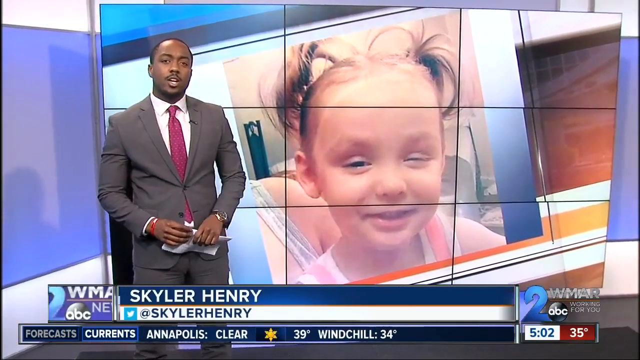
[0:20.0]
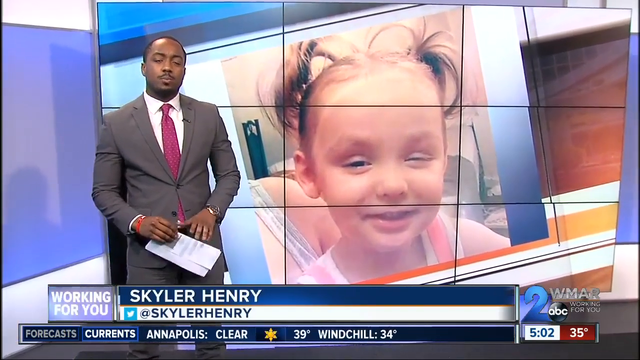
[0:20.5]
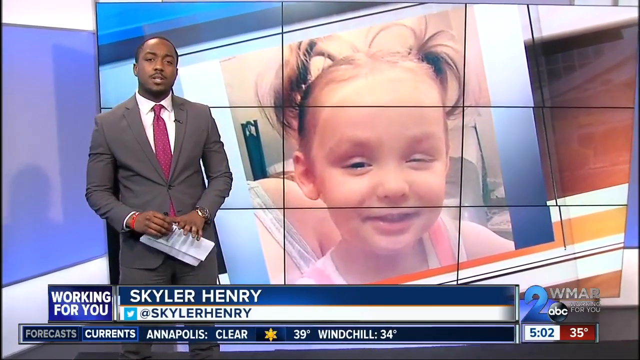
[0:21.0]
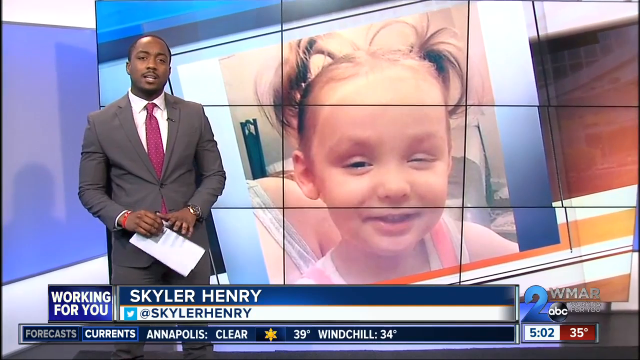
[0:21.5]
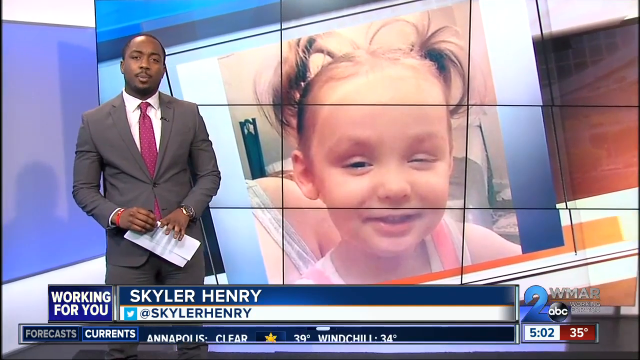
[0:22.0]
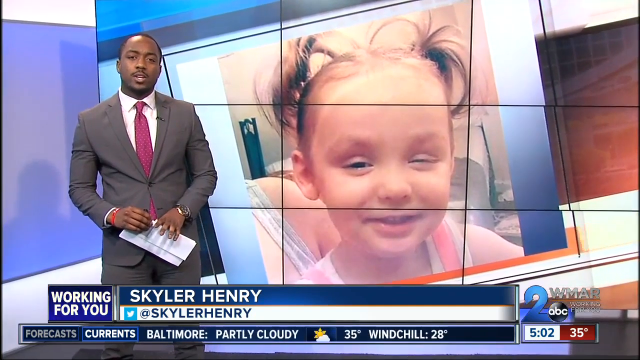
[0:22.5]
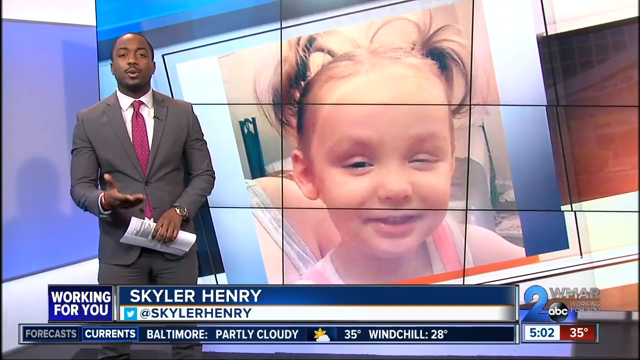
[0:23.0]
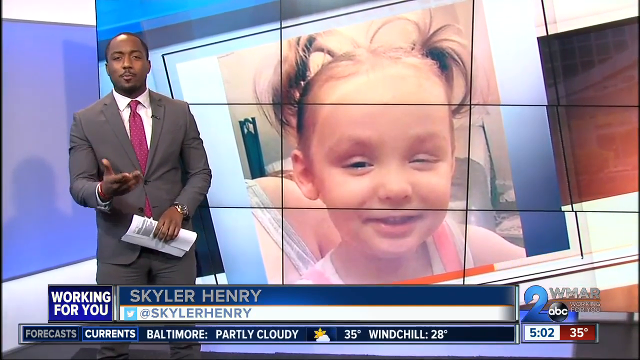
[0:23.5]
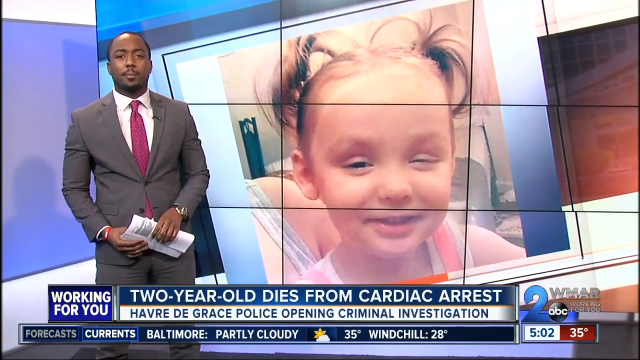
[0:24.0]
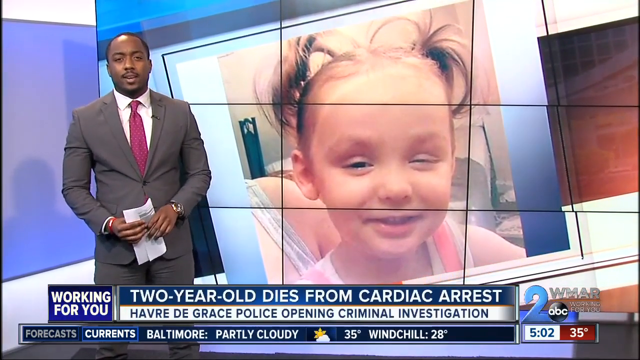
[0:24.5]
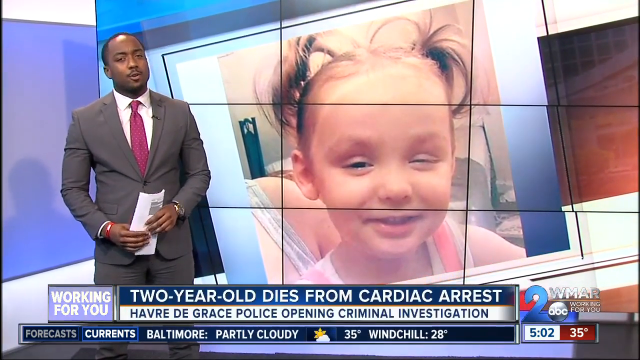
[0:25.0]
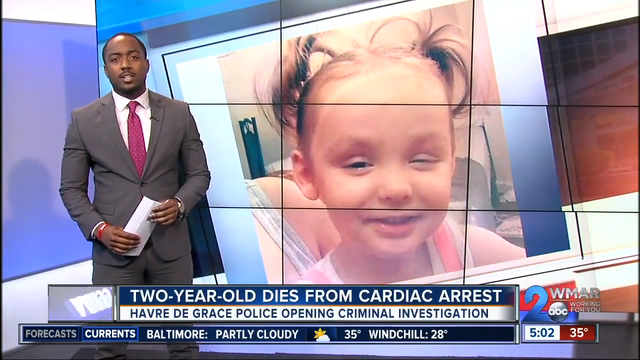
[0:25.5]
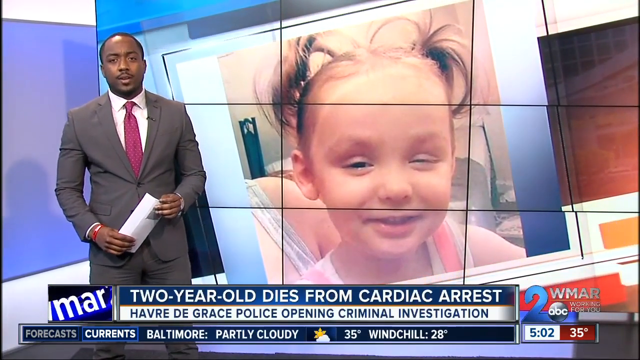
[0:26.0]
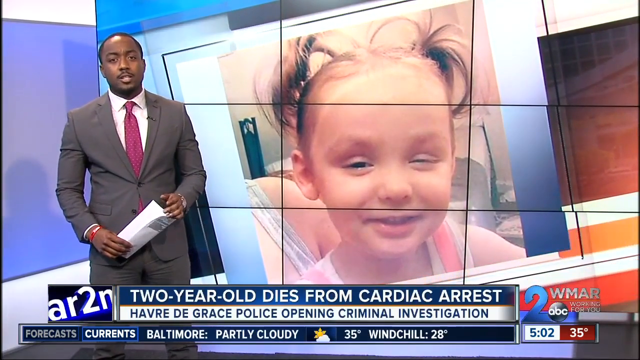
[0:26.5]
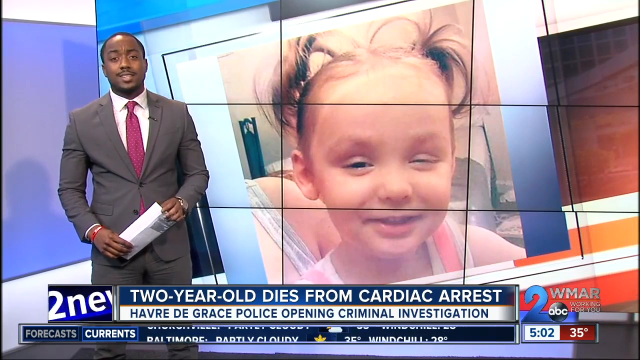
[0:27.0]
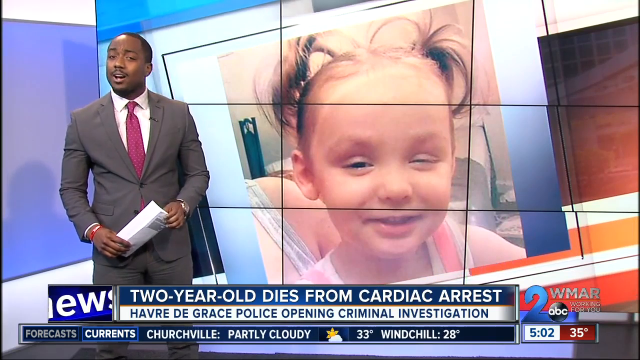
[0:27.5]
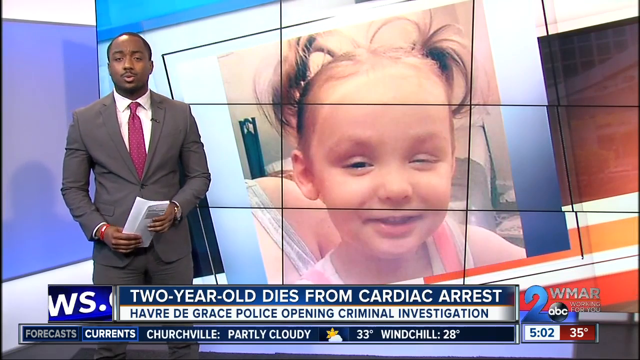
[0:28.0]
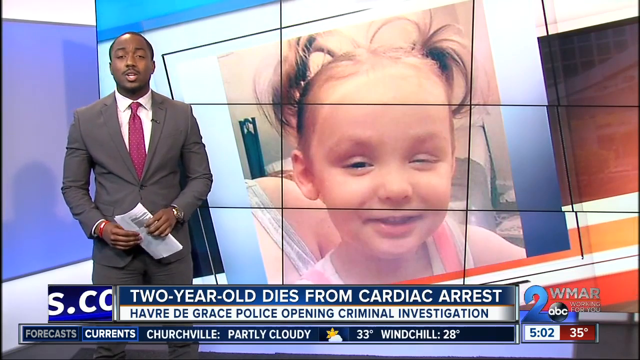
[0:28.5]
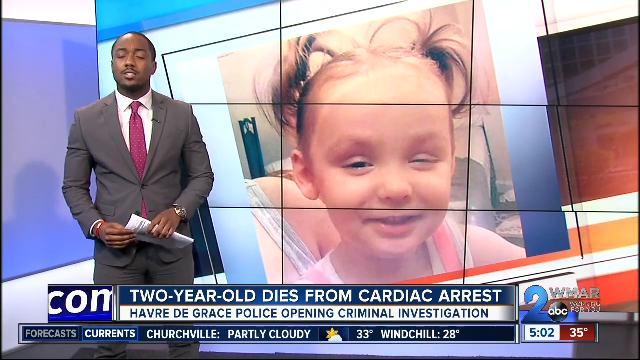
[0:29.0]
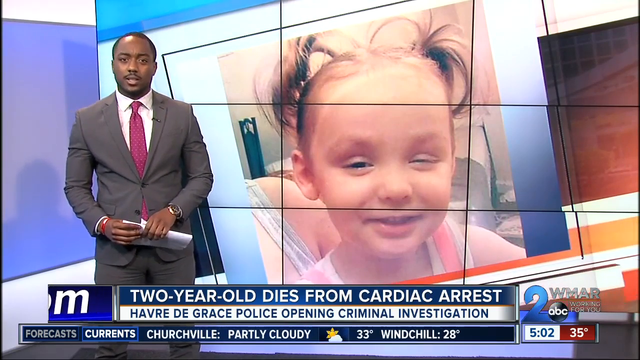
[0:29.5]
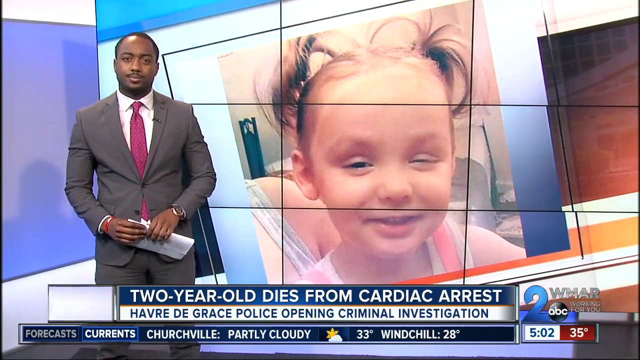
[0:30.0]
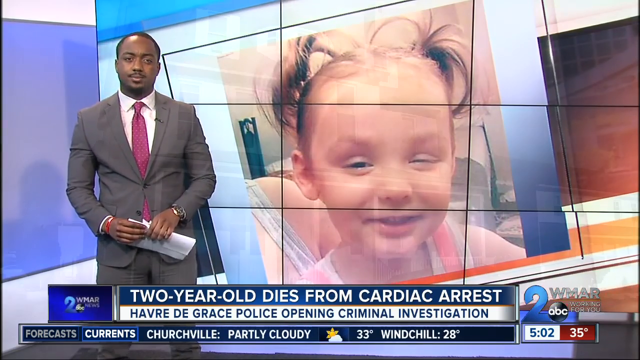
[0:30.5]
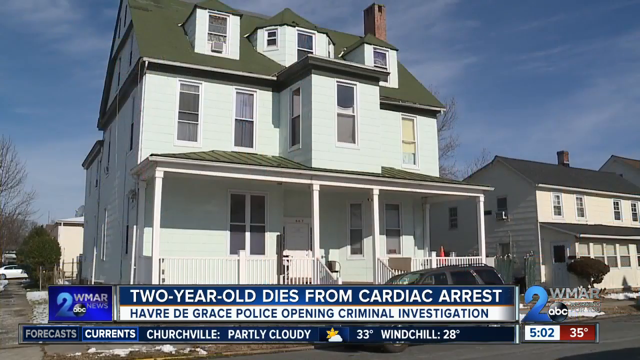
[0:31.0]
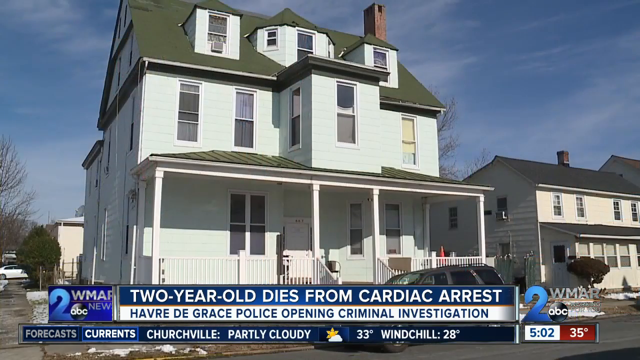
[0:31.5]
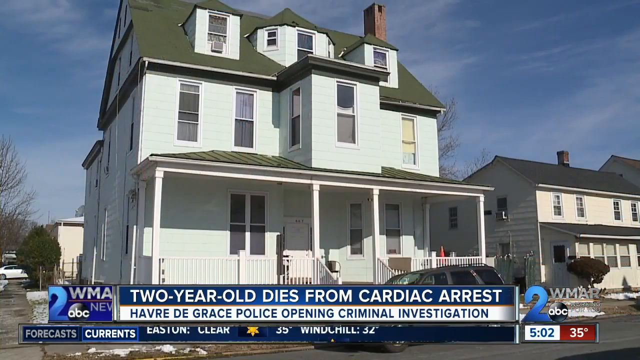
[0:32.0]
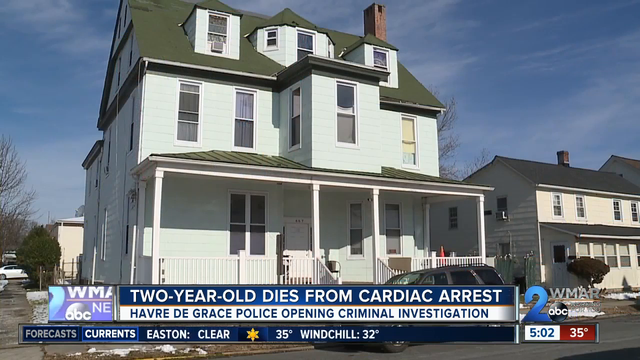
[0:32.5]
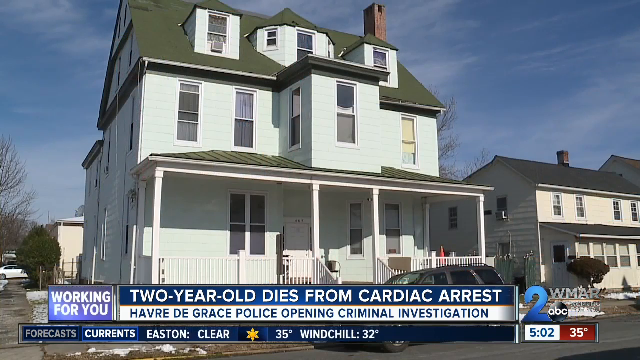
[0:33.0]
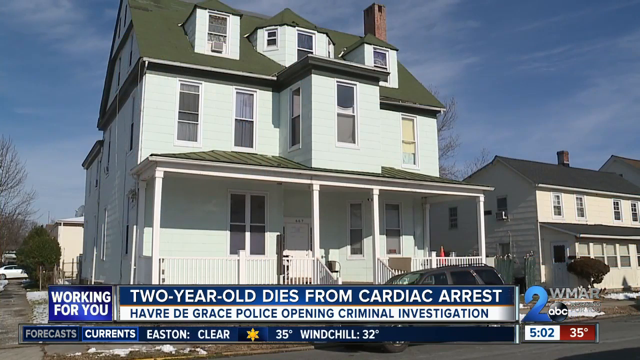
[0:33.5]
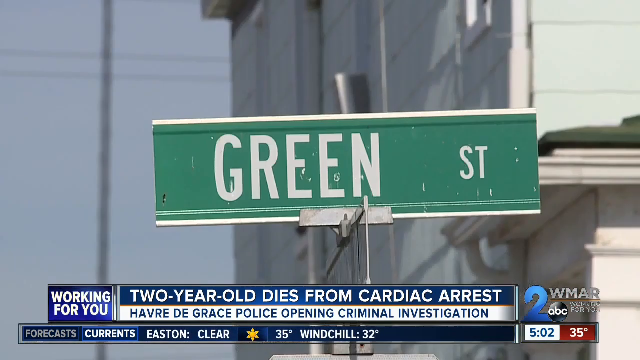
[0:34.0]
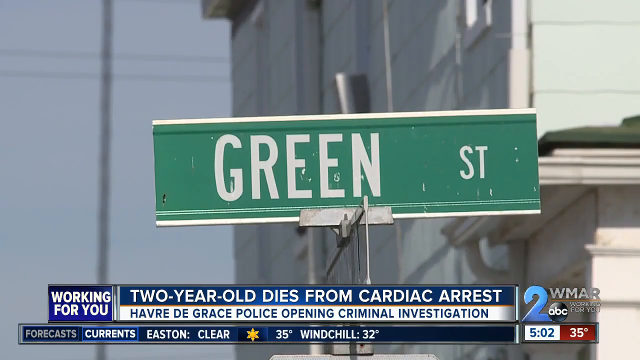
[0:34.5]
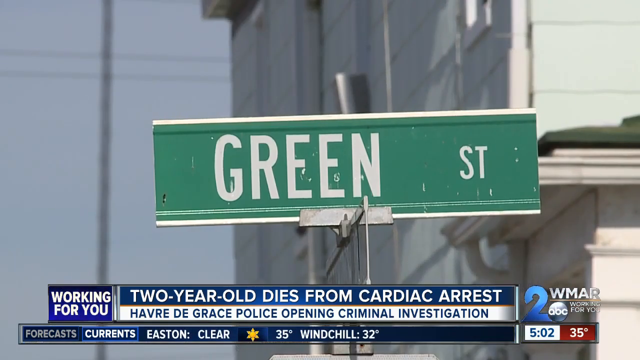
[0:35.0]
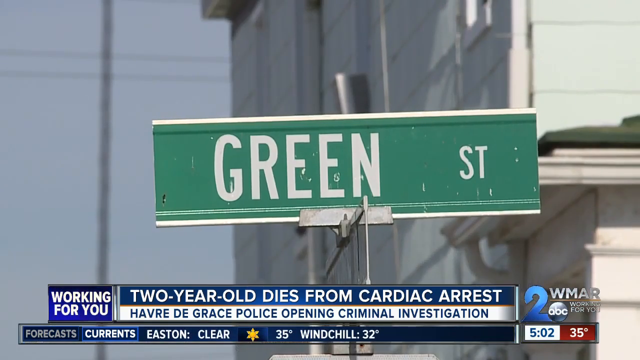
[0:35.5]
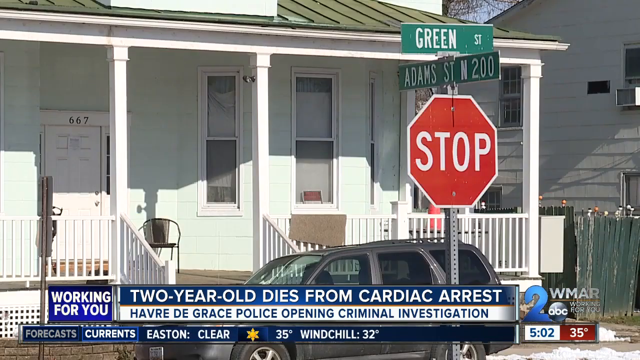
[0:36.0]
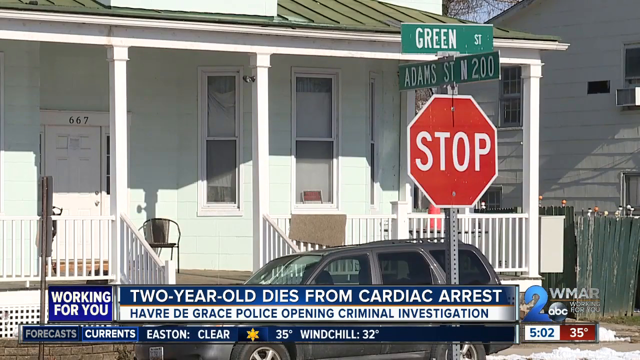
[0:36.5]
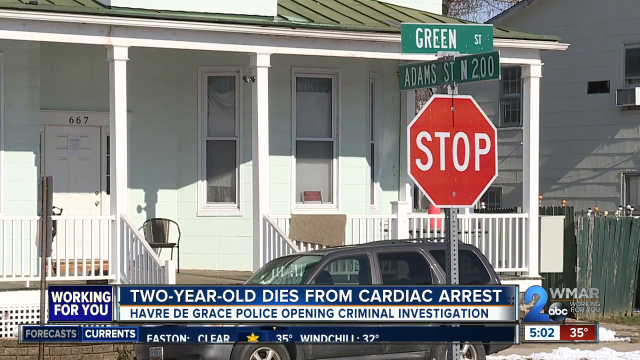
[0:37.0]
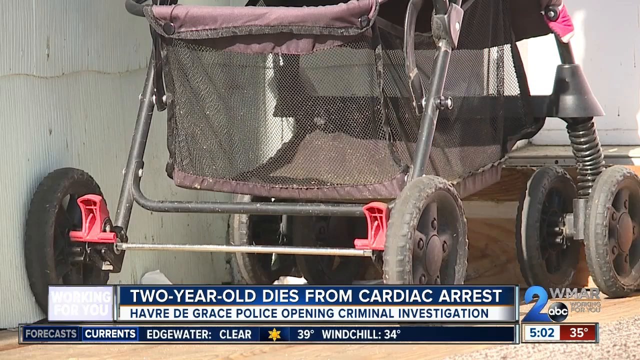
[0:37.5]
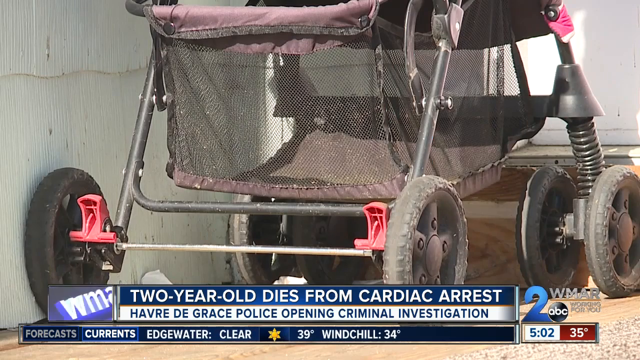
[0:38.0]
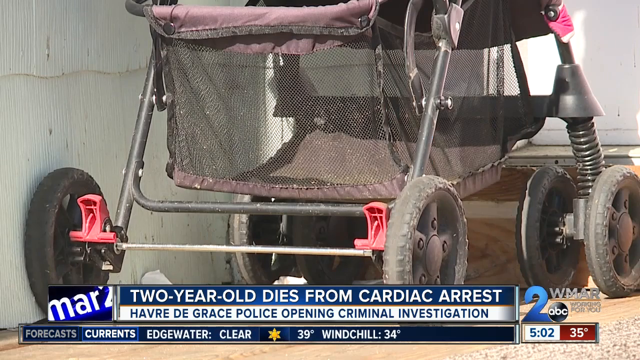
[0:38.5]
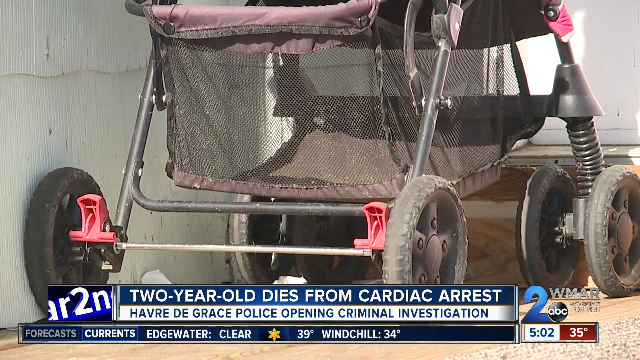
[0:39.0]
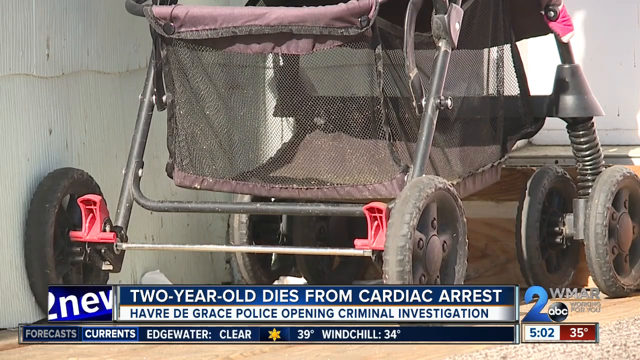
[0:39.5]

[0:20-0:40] A news reporter named Scholar Henry, an African-American man in something like a gray blazer, a red tie and a white shirt, holds a piece of paper in his hand and shows a little girl on a monitor. The broadcast is Channel 2 News, Channel 2 ABC, with weather scrolling at the bottom of the screen. The text reads "two-year-old dies from cardiac arrest," along with a caption about police opening a criminal investigation; the girl on the monitor is apparently the one who died. Text reads "Green Street," and then a small baby stroller is shown.